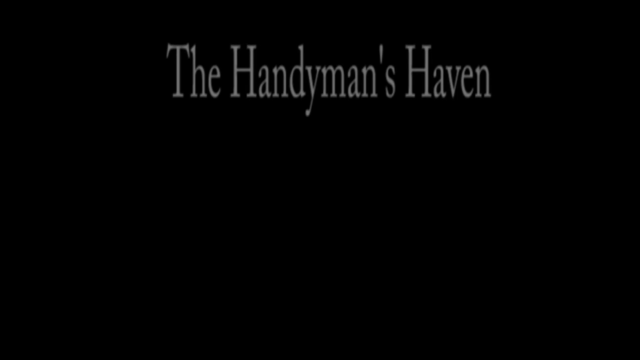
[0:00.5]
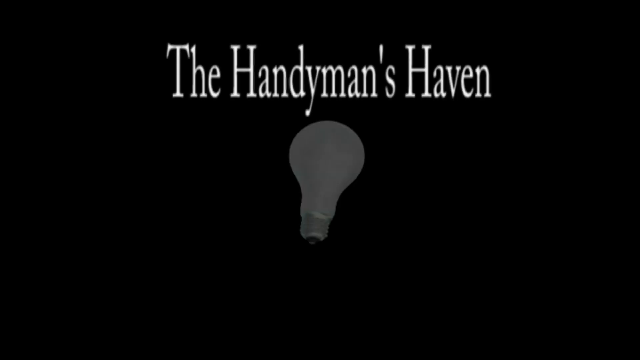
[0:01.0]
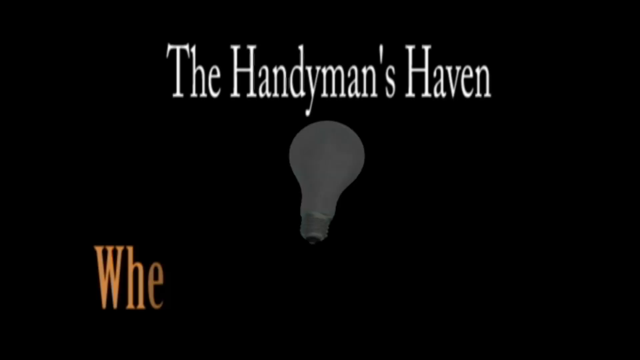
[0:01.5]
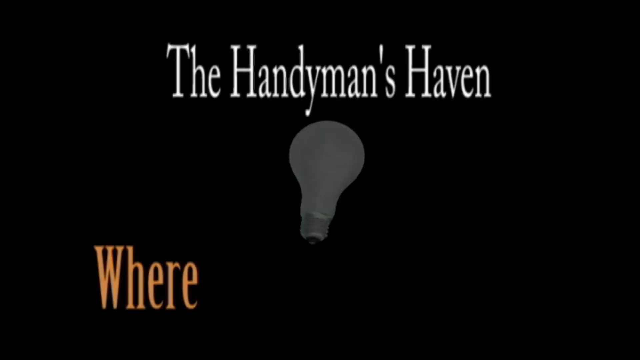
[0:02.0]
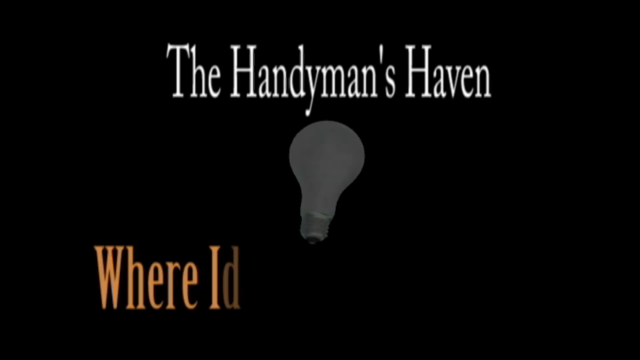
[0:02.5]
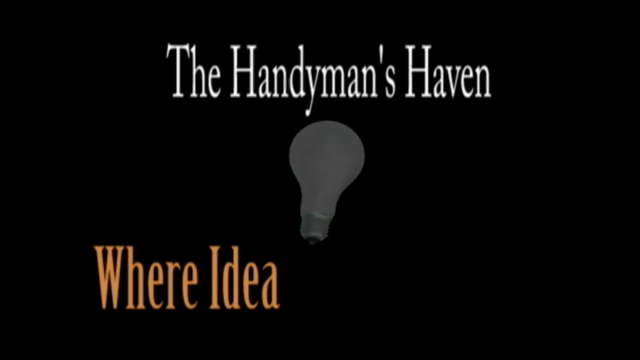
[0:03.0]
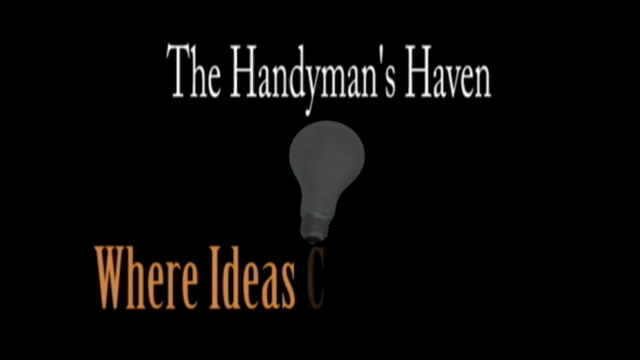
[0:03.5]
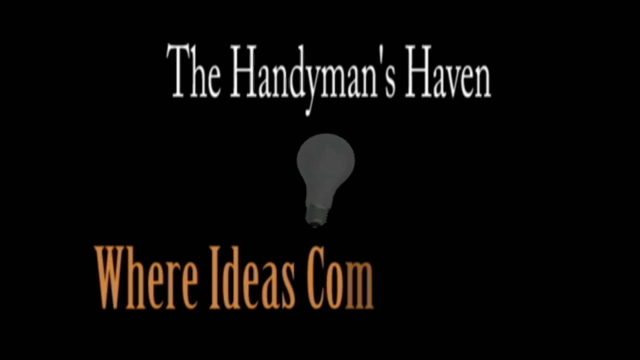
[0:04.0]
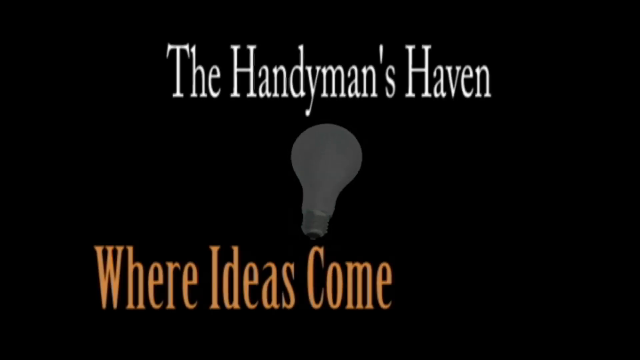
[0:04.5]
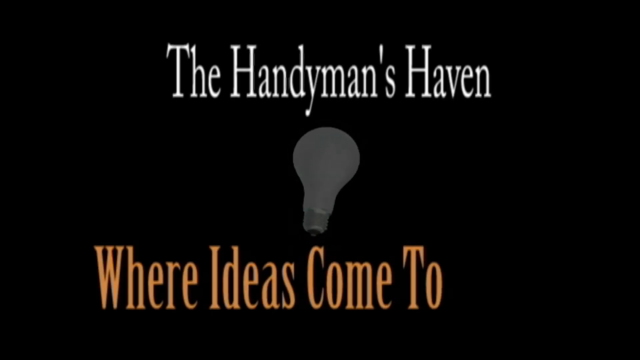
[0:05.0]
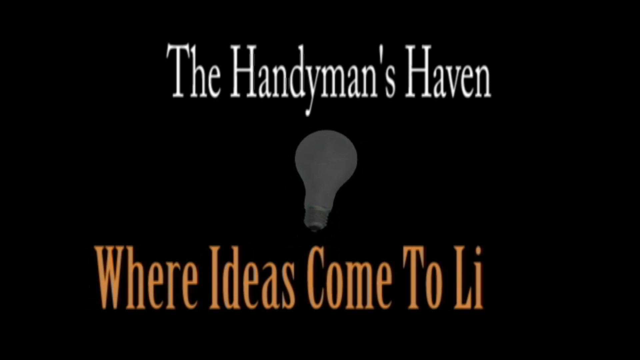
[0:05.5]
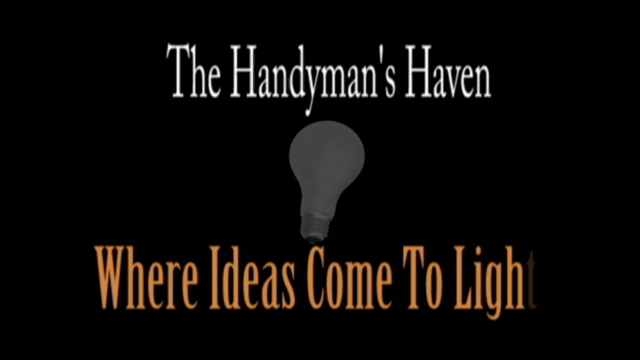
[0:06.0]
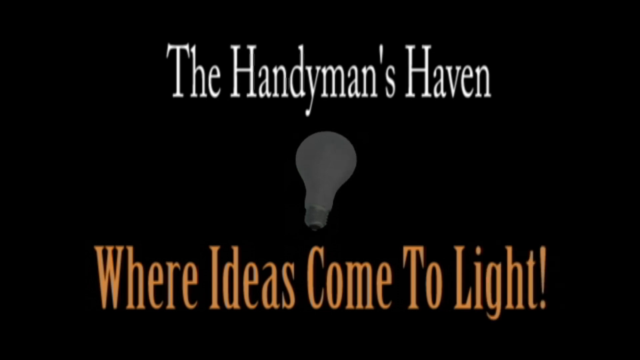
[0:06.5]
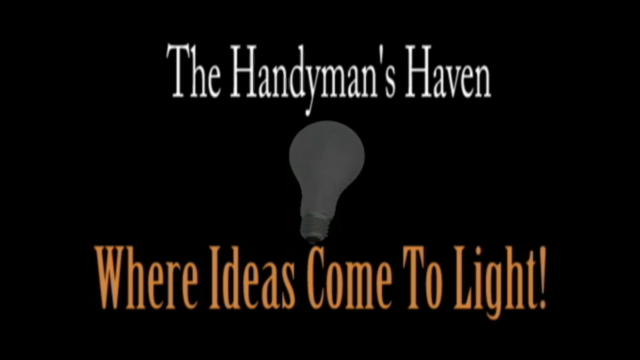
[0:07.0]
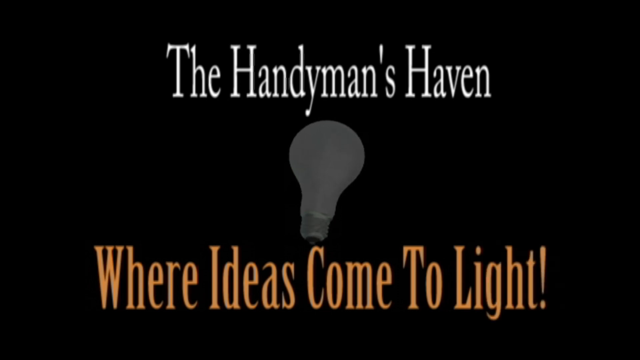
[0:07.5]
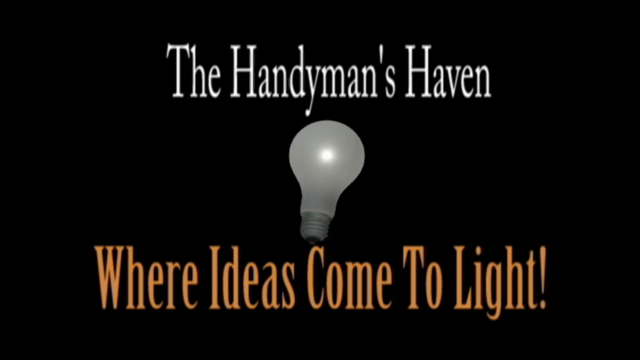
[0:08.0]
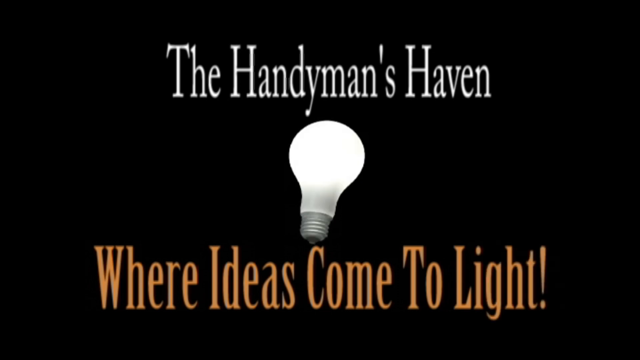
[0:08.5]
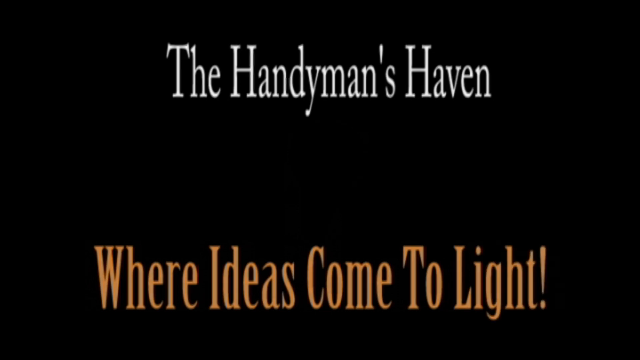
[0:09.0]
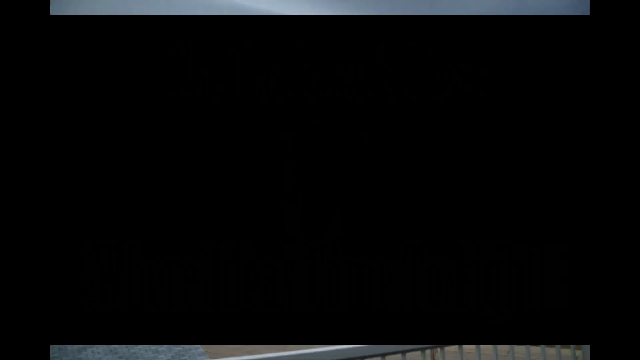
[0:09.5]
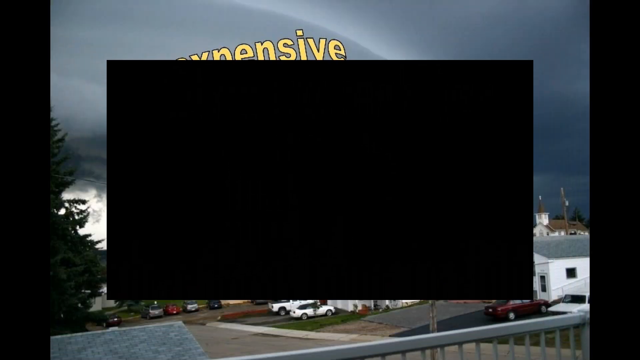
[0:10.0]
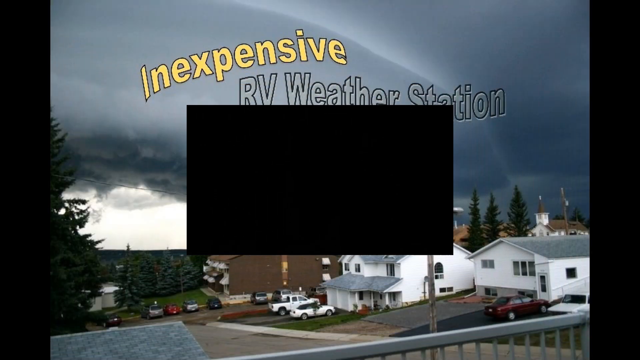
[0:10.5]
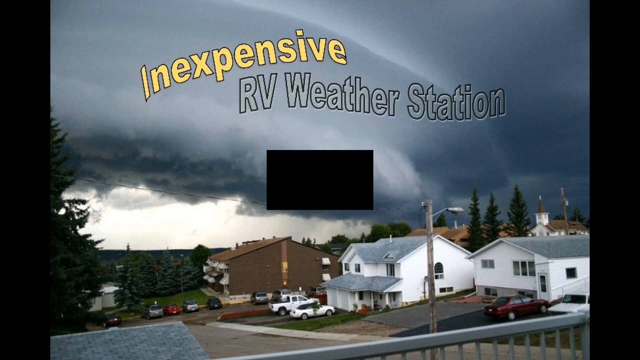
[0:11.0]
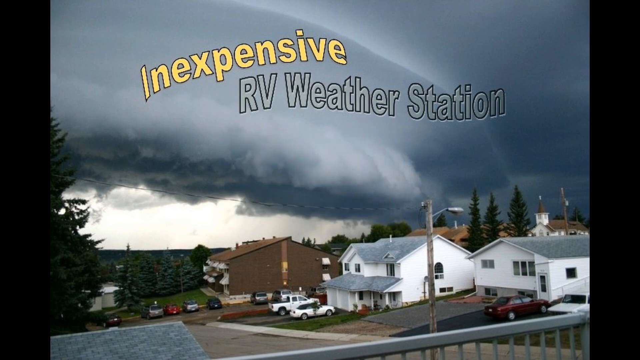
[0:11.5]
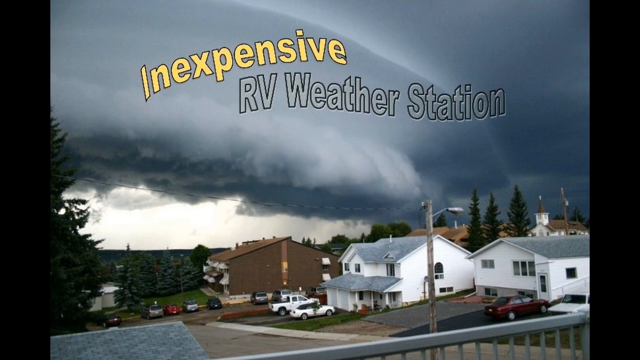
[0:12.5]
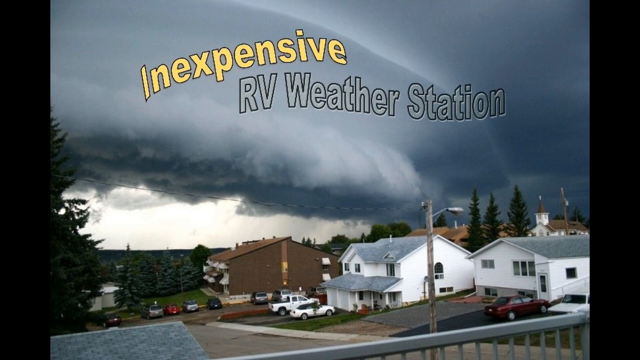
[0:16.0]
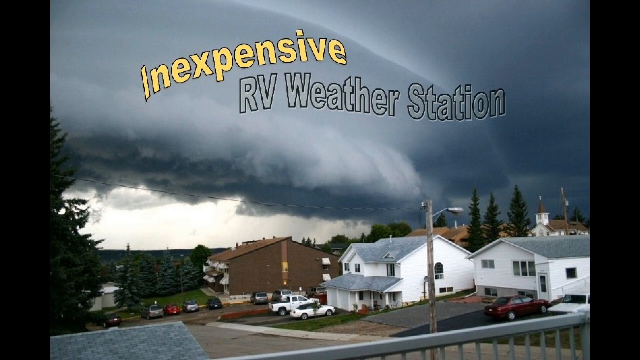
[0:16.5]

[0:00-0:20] The video opens on a solid black screen, then writing appears across the top reading "The Handyman Haven" along with a grayed-out lightbulb. The words "where ideas come to light" form, and the lightbulb lights up and grows brighter. The first topic shown is an inexpensive RV weather station.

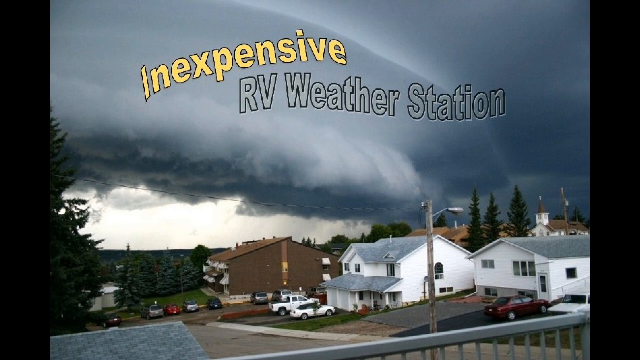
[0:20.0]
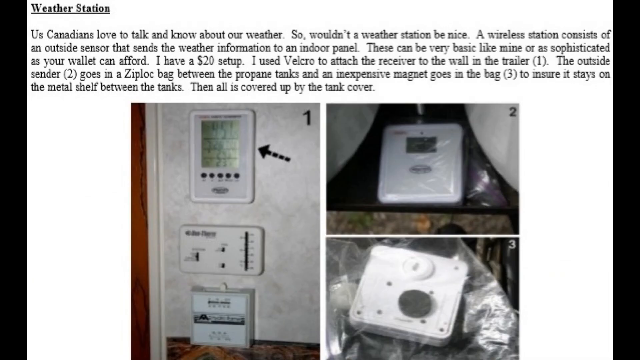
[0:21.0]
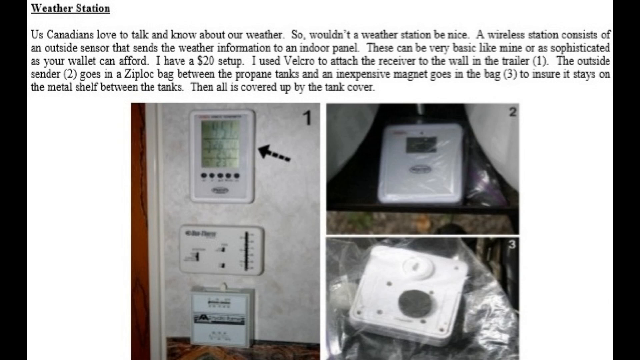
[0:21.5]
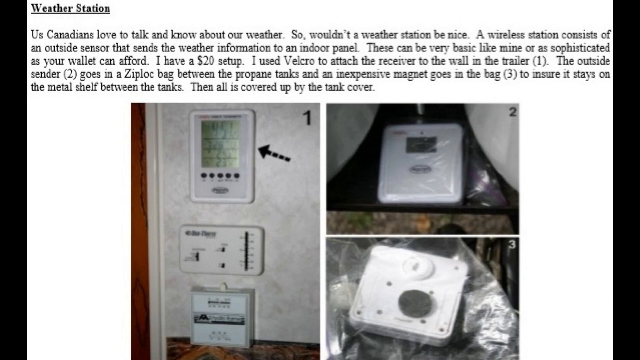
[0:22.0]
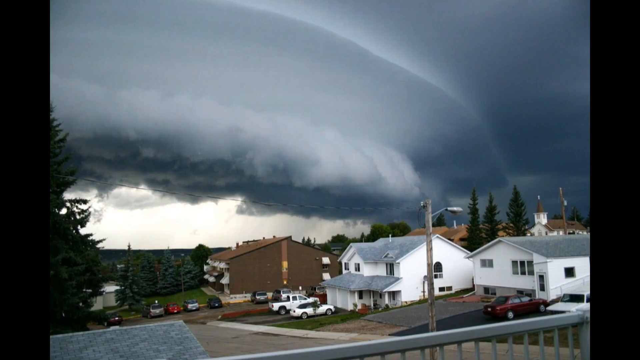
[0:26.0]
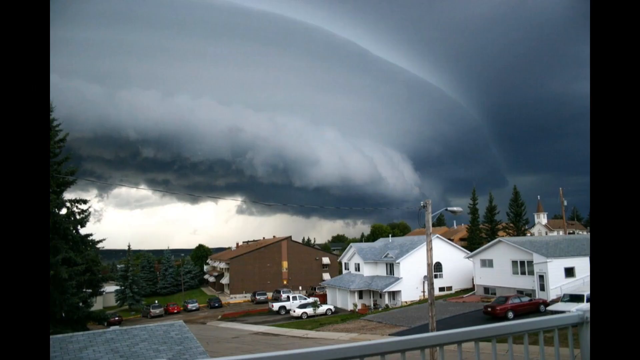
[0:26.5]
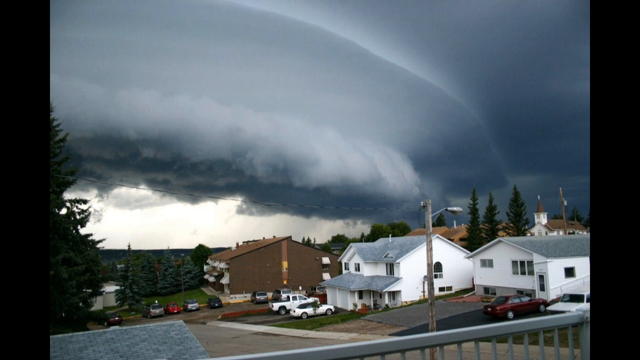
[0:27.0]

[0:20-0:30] A dark storm cloud hangs in the sky, forming a strange line halo around the lower clouds, with the writing "inexpensive RV weather station" across the clouds. Below are a few houses, a church, and what possibly looks like a couple of apartment complexes. The video then switches to another scene headed "weather station" with the text "us Canadians love to talk and know about our weather." The text goes on to describe a wireless station consisting of an outside sensor that sends weather information to an indoor panel, says these can be basic or sophisticated, and reads "I have a $20 setup," mentioning a receiver attached to the wall with Velcro, a zip lock bag, and a magnet that goes in the back.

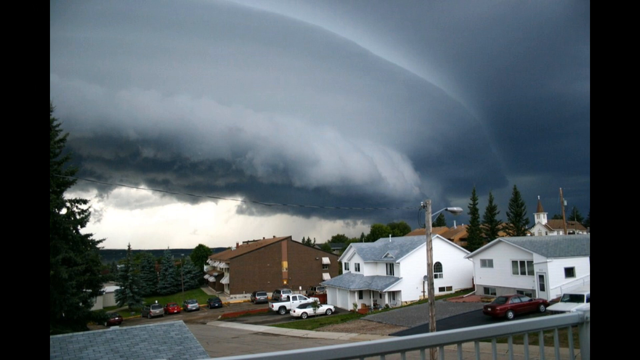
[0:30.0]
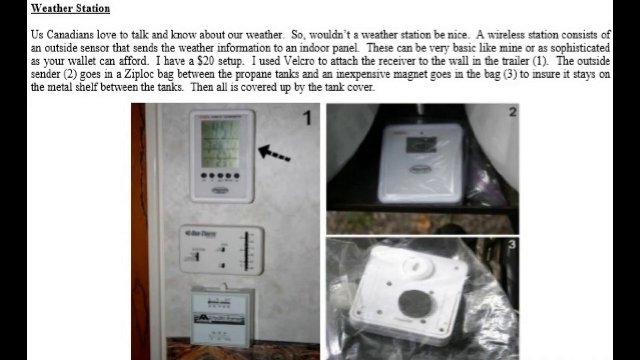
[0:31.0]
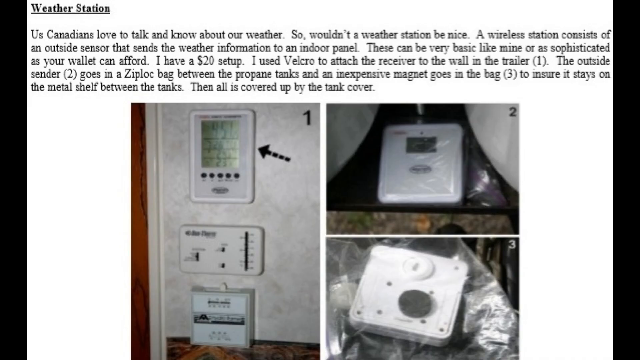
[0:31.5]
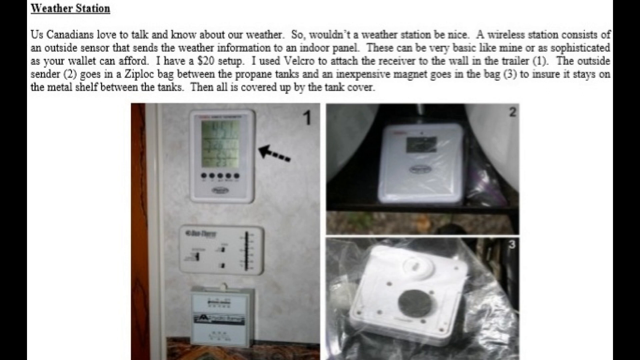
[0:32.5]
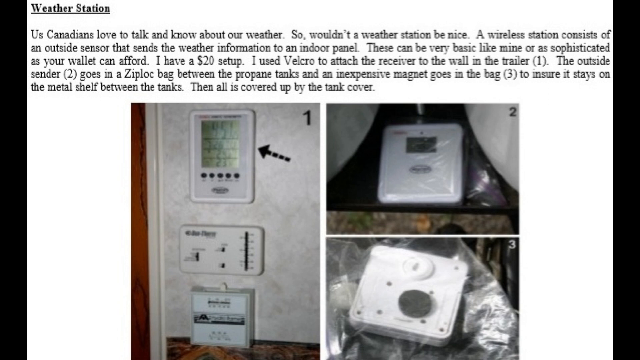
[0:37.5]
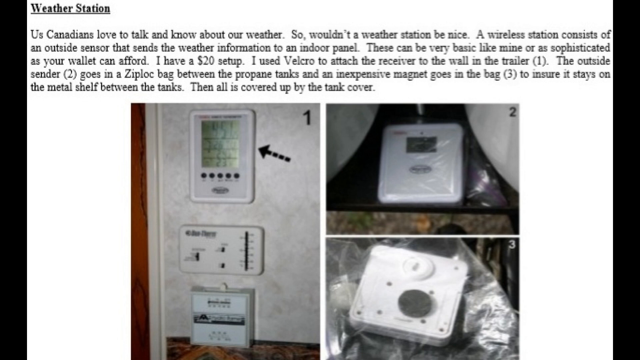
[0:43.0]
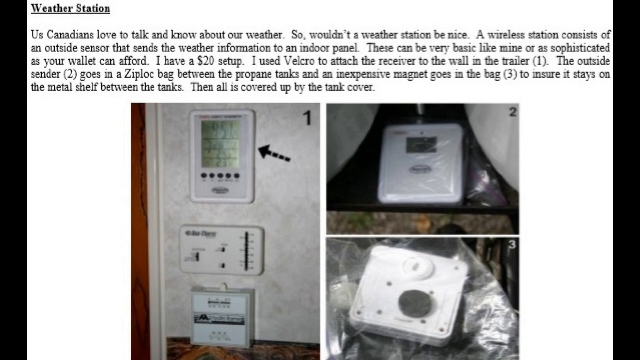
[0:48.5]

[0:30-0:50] A line of storm clouds fills the sky, with a menacing-looking halo of light coming from the top of the clouds. A church is in the background, along with some larger houses, an apartment complex, and a bunch of pine trees in a hilly neighborhood. The video then moves on to a weather station, noting that Canadians love to talk and know about weather, that this weather station is a $20 setup, that a very good weather station can be had for more money, and that a Ziploc bag is used to keep the instruments dry.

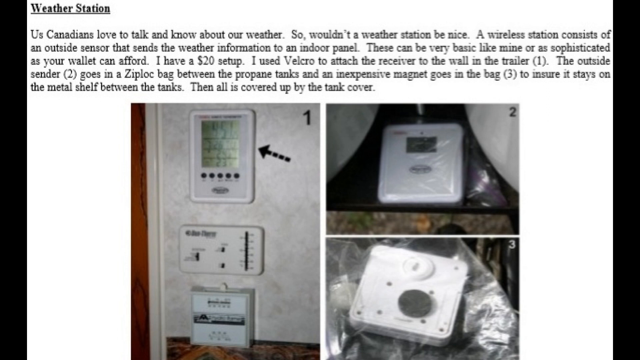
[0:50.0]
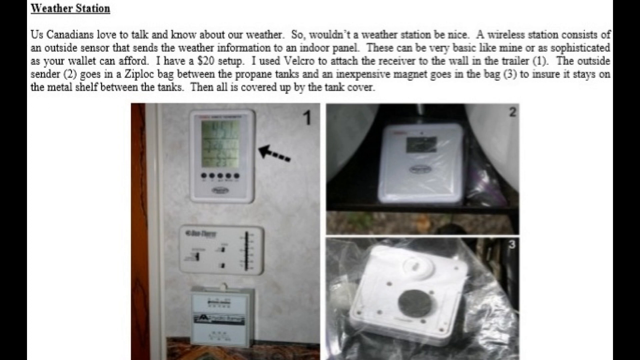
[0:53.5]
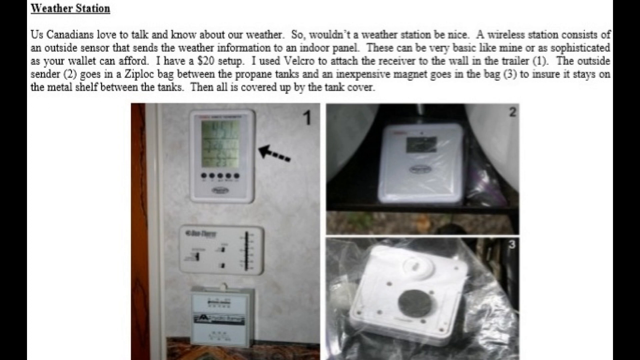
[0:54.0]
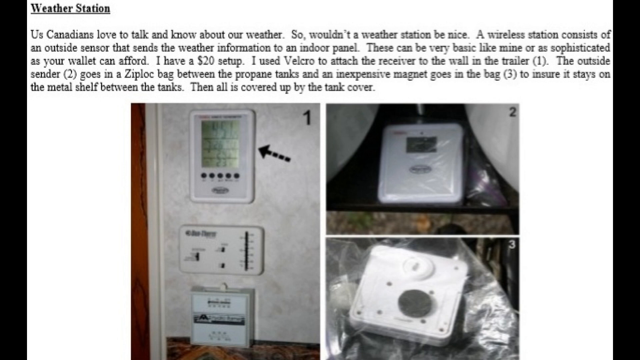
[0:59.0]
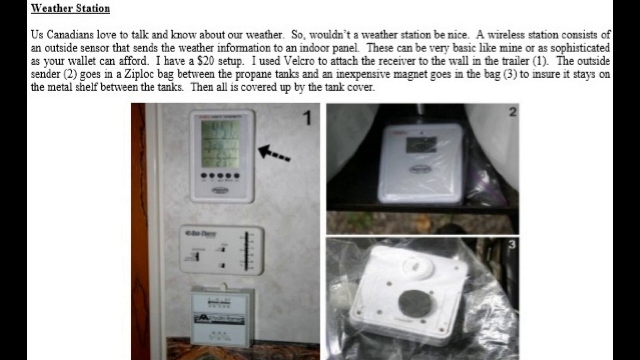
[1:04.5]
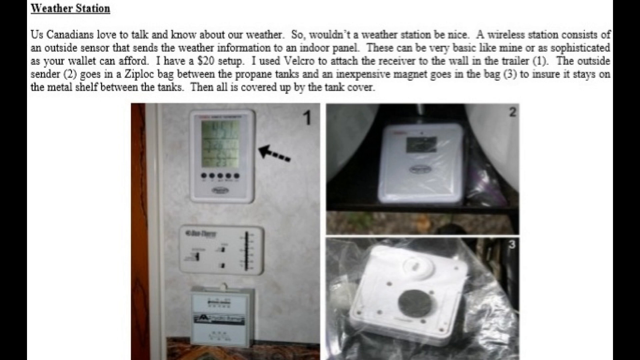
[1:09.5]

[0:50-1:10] A page titled "weather station" reads "us Canadians love to talk and know our weather, so wouldn't a weather station be nice?" The text explains that a wireless station consists of an outside sensor that sends information to an inside panel, that it can be very basic or very sophisticated, that one can cost as little as $20, and that one can be made for outside or be an inexpensive one covered with ziplock bags and magnets to keep it safe from the weather. A few pictures at the bottom show what an indoor weather station setup may look like, with the author's unit up above his thermostat.